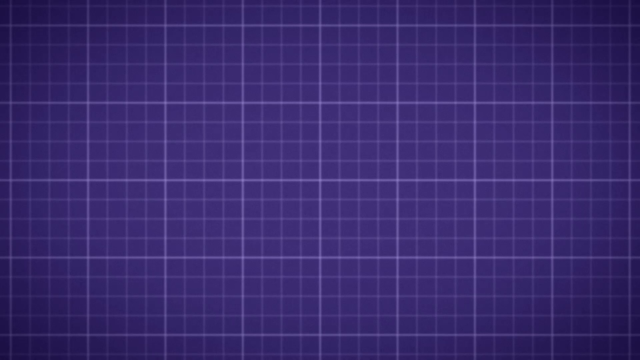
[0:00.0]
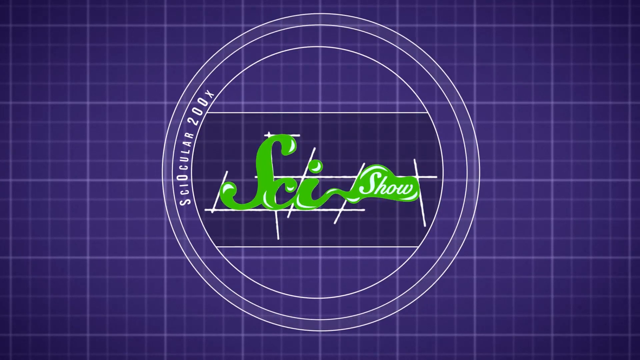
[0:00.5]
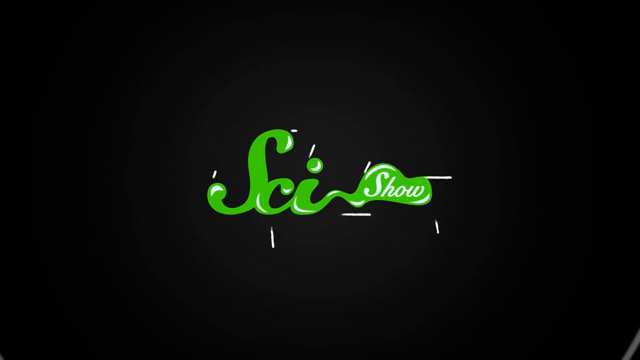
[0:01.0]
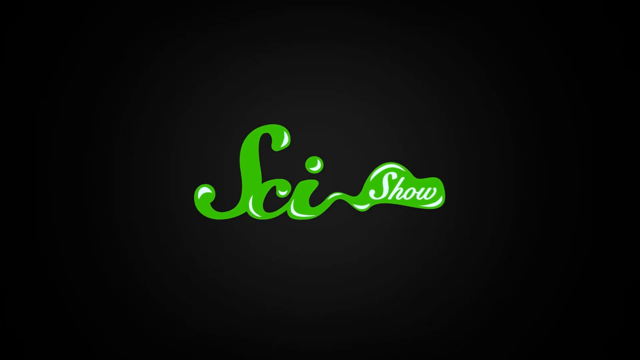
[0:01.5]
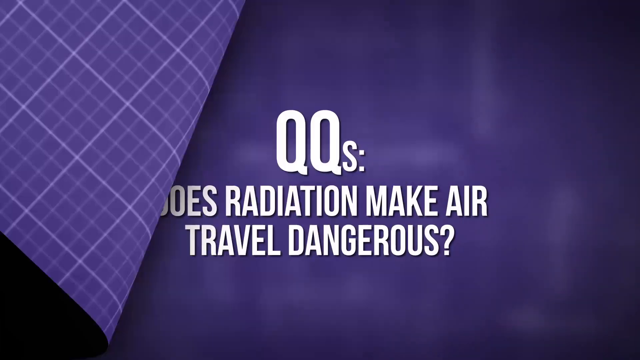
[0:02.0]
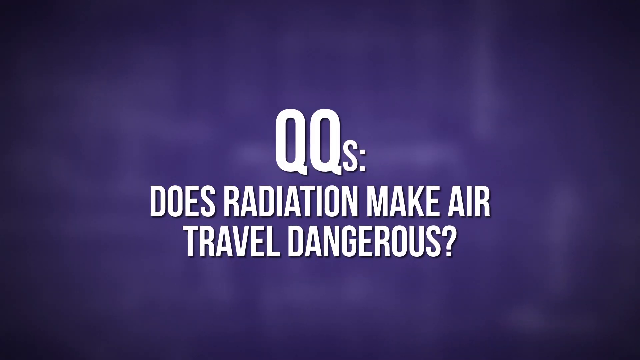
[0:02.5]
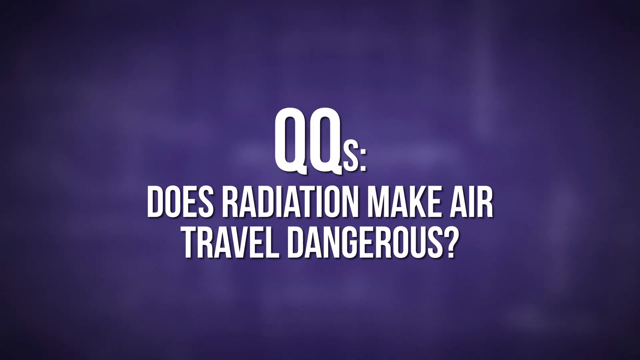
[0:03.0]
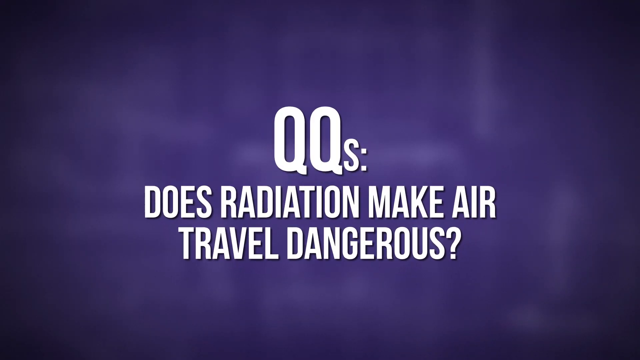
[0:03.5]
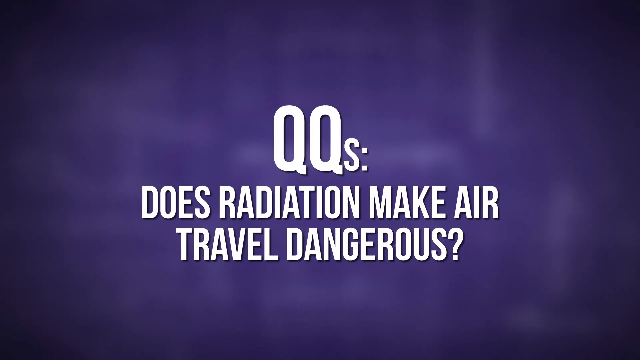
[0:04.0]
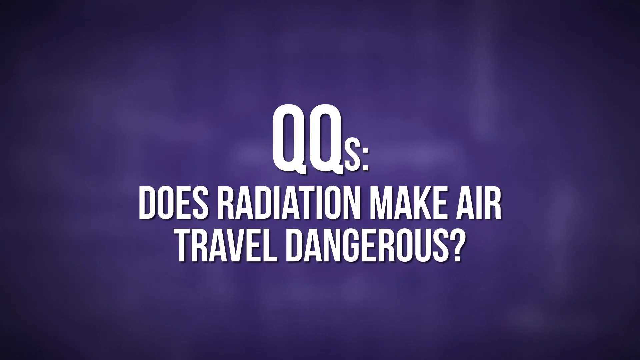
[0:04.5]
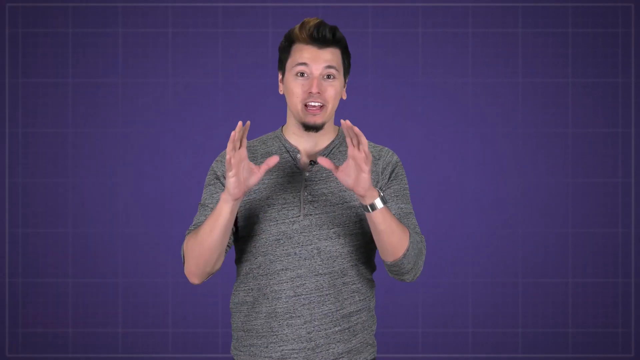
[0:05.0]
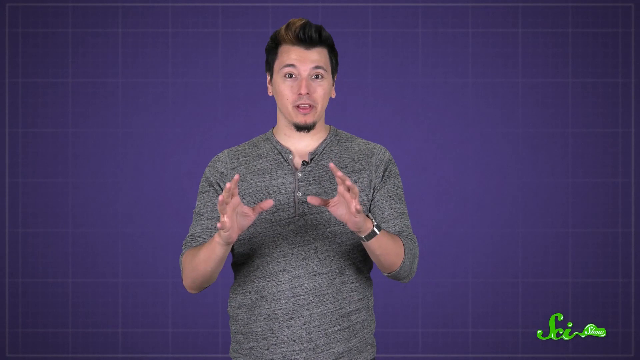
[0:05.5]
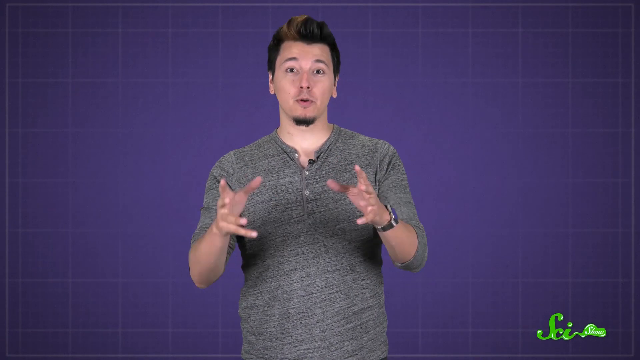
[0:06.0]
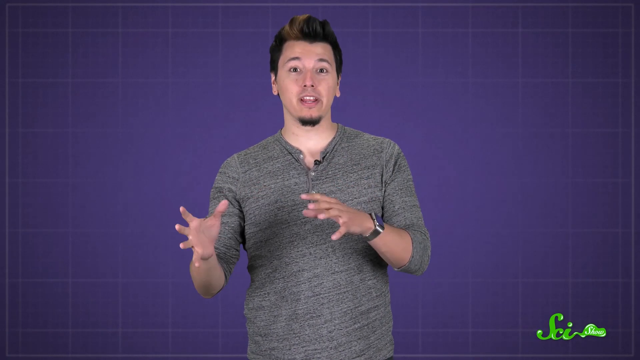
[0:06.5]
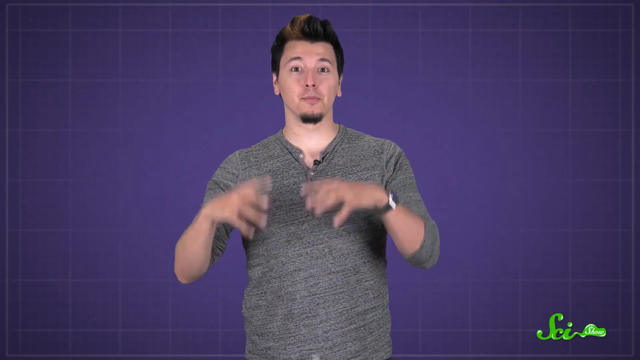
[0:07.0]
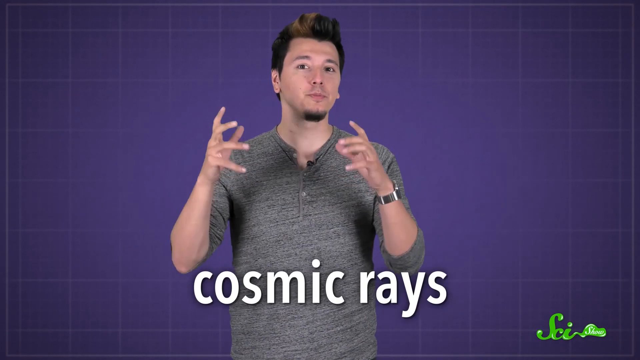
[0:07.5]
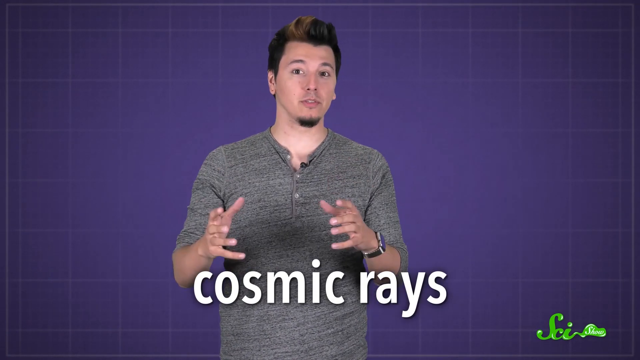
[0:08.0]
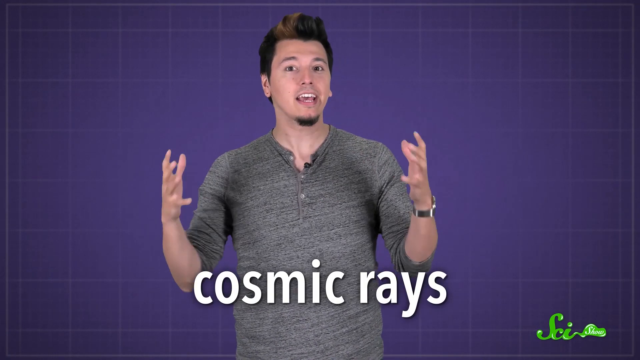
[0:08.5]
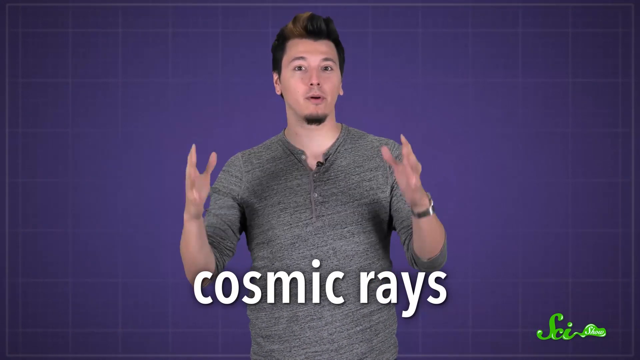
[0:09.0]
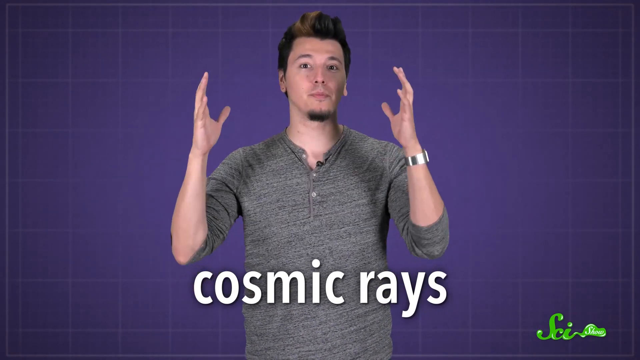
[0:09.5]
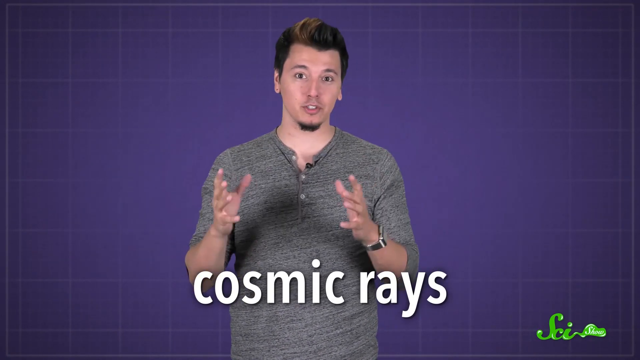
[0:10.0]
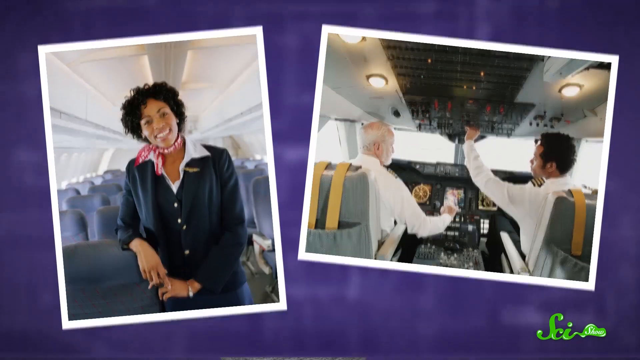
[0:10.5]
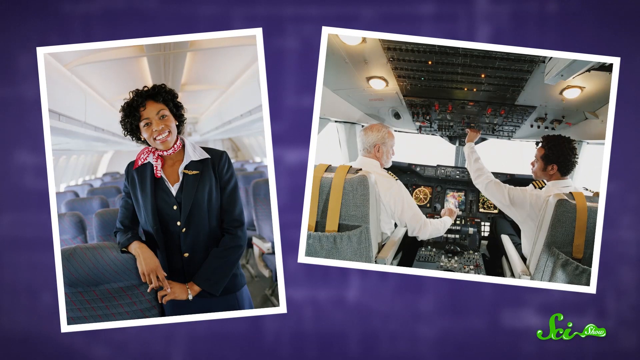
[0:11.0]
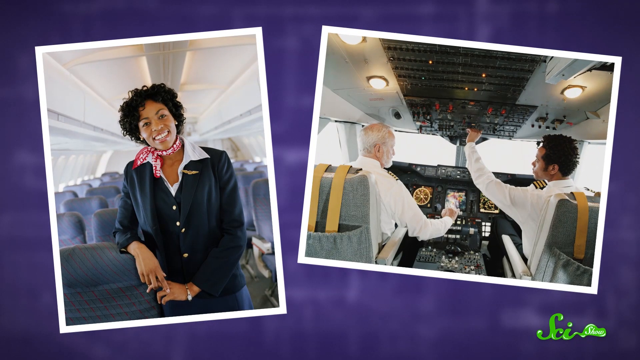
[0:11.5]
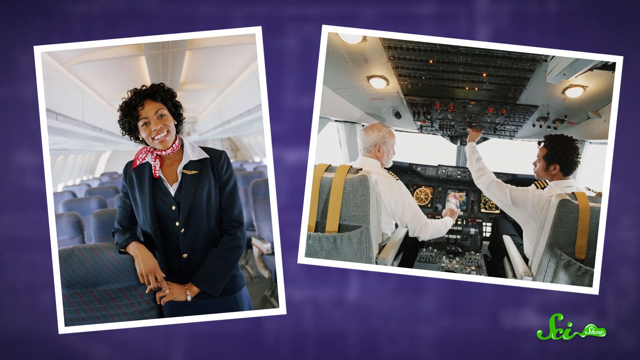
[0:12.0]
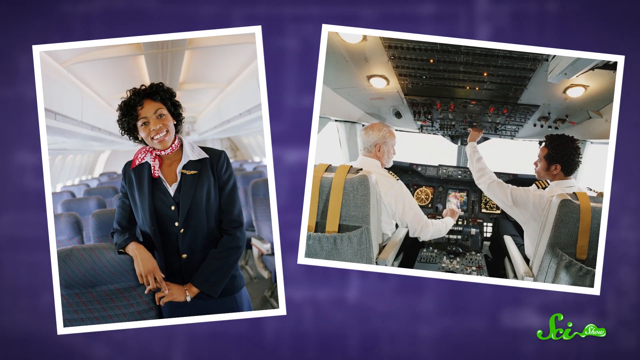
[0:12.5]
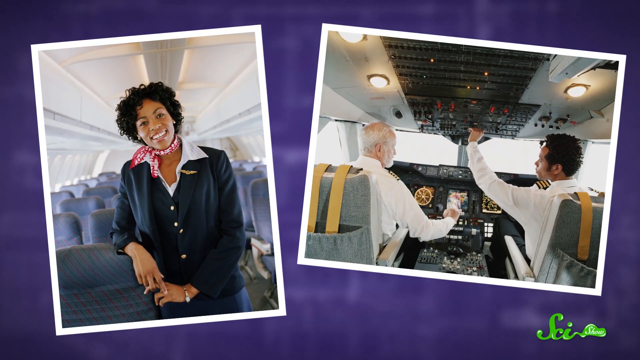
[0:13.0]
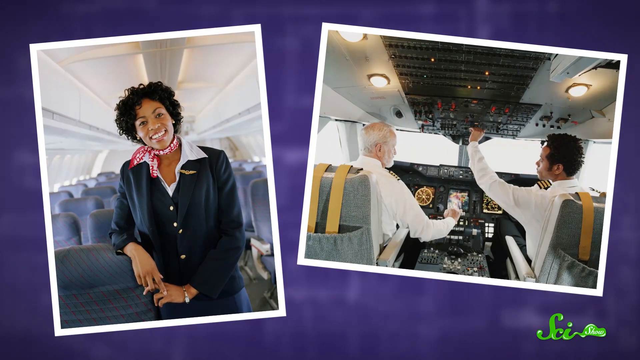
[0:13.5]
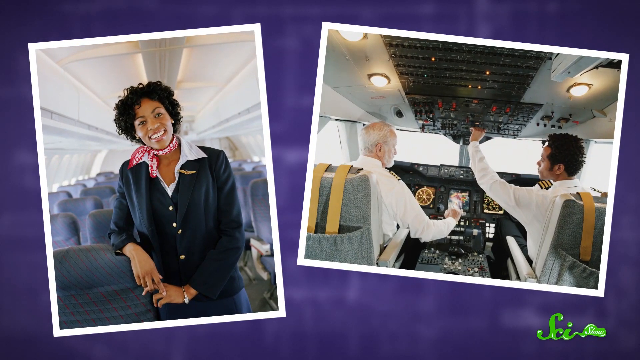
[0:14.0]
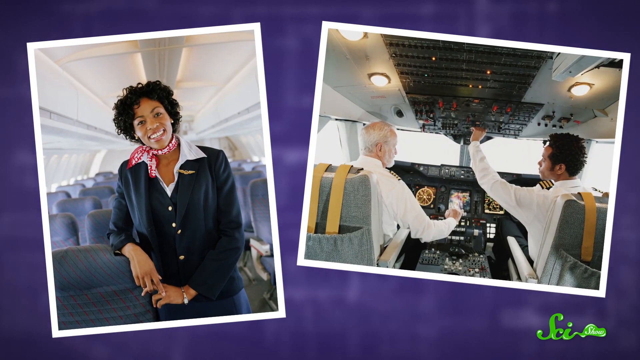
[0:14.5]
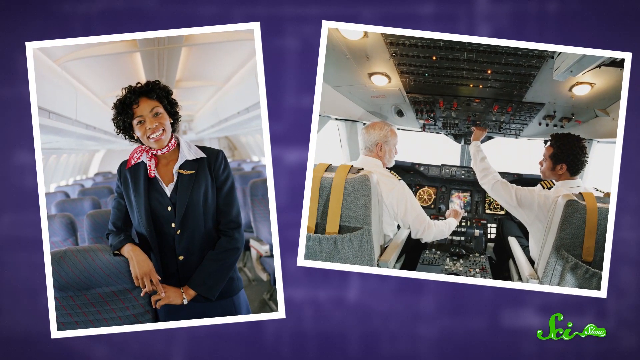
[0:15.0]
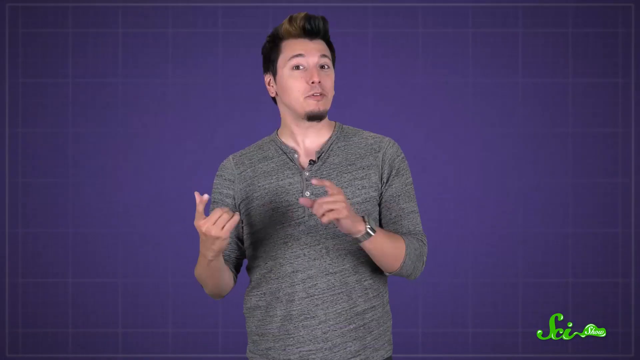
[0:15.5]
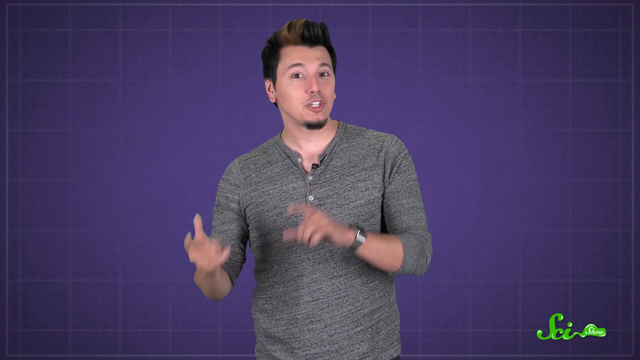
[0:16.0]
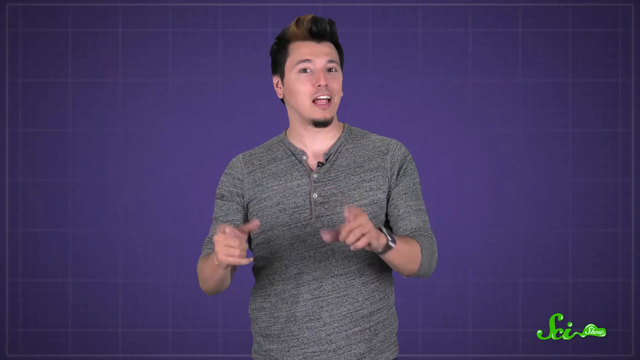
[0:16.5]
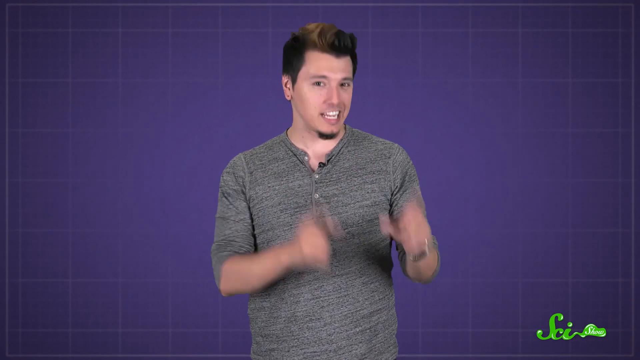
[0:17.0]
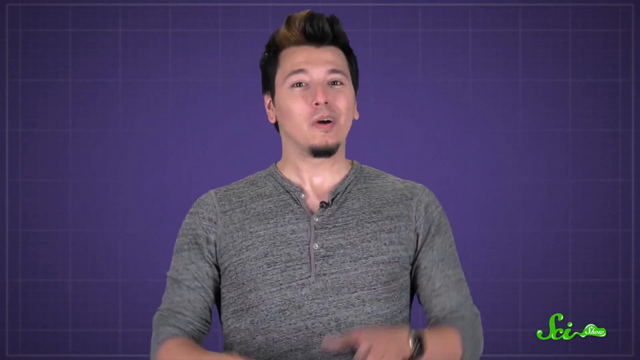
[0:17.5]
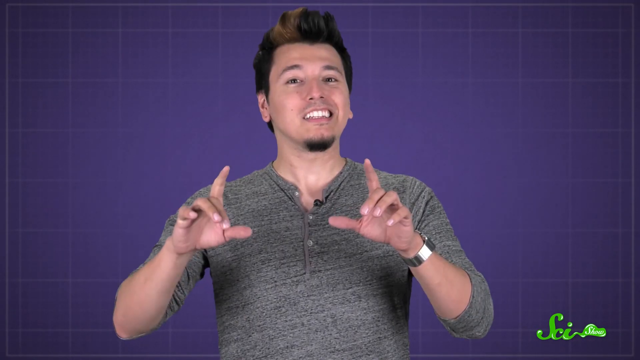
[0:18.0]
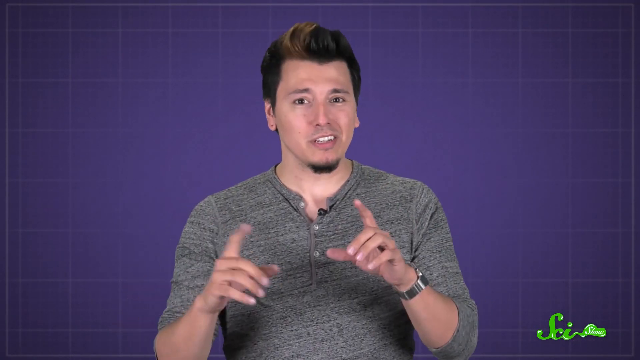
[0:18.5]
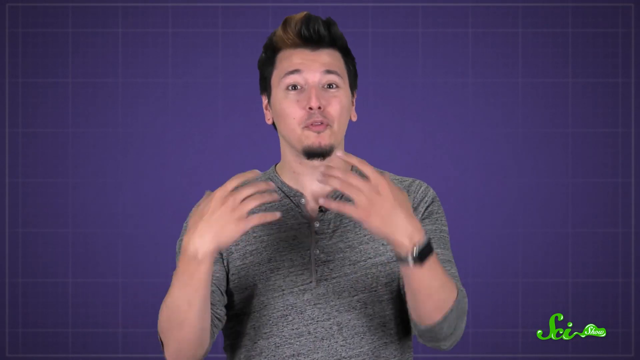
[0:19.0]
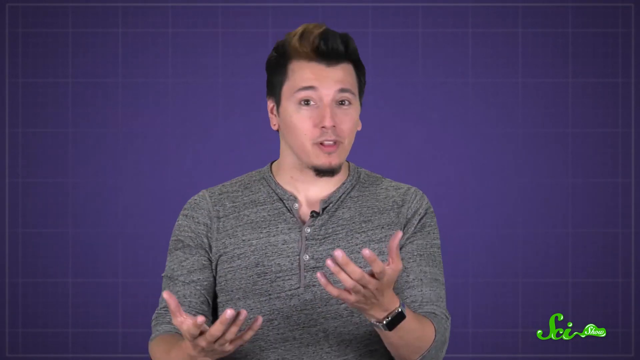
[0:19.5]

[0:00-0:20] The video begins with a purple background covered by fine white lines running horizontally and vertically, forming a grid of interlocking squares, with finer lines dividing each square into four by four smaller squares. This remains for a few seconds, and then a logo reading "SciShow" briefly appears in the center of the screen, in green fluid text with white line highlights around it. The title of the video then appears in large white text against a blurred purplish background: "QQs: Does radiation make air travel dangerous?" This quickly transitions to a young man speaking into the camera. He wears a gray shirt with the sleeves pushed up to his elbows and a watch on his left wrist. He is fair-skinned, with neck-length dark brown hair and a goatee, and his eyes are wide open. He holds both palms in front of him facing forward and gesticulates animatedly, moving his hands closer to the camera as he speaks. The words "Cosmic Rays" appear along the bottom of the screen. The scene then transitions to a couple of photographs. One shows an airline attendant in a blue jacket with a white shirt underneath and a red and white scarf tied around her neck; she faces the camera with her right arm leaning on a seat inside an airplane. The other is a rear view of two pilots at the controls, each operating different components, both wearing white shirts with insignias on their shoulders. One is fair-skinned, with white hair and balding; the co-pilot next to him is dark-skinned with neck-length hair and is looking towards the pilot. The video then returns to the man in the gray shirt, who holds his hands in front of him with his fingers pointed upwards as he speaks. The camera zooms in on him a few times.